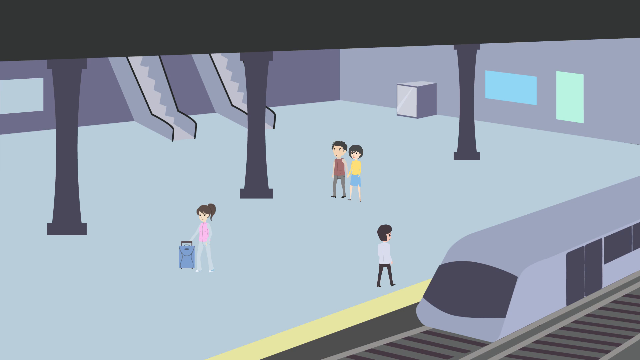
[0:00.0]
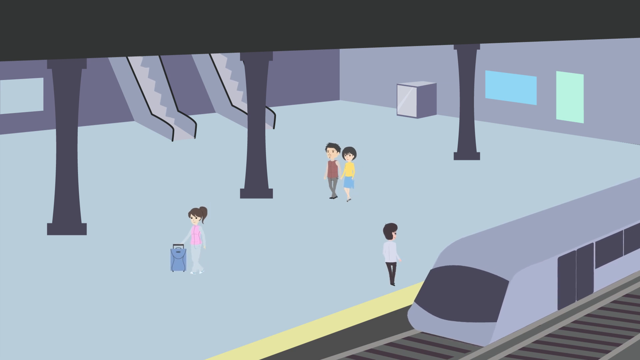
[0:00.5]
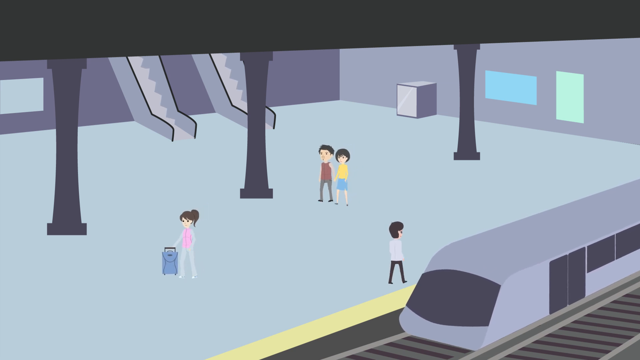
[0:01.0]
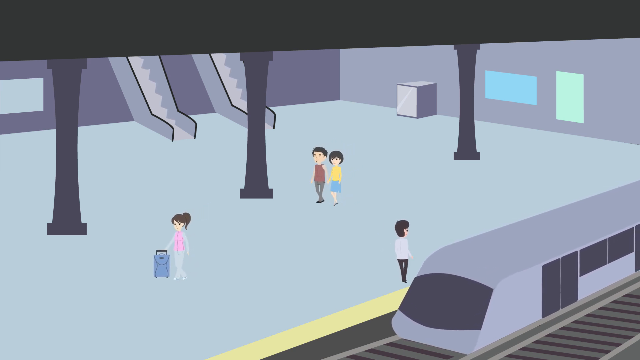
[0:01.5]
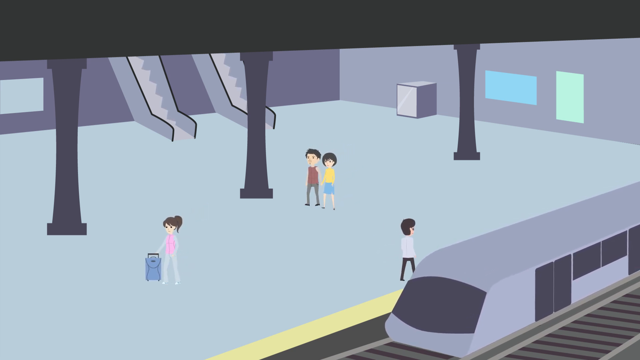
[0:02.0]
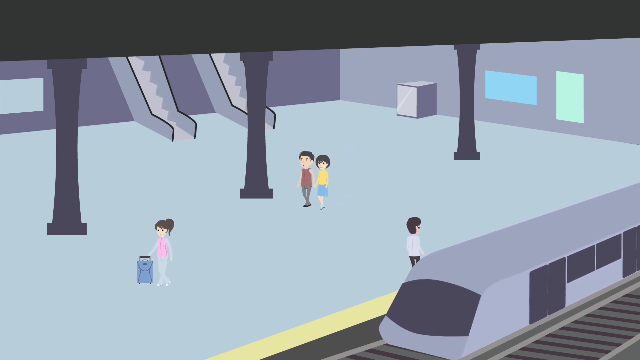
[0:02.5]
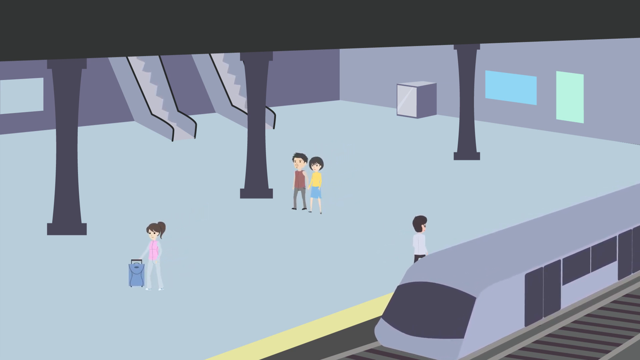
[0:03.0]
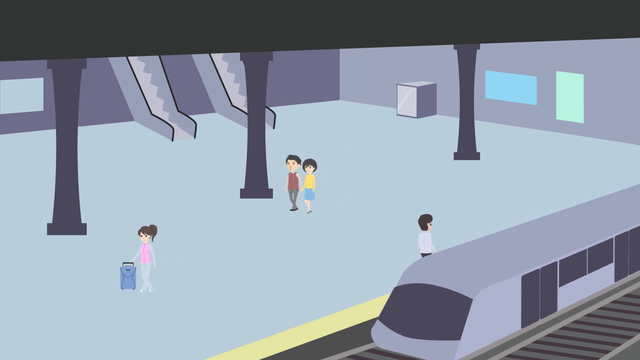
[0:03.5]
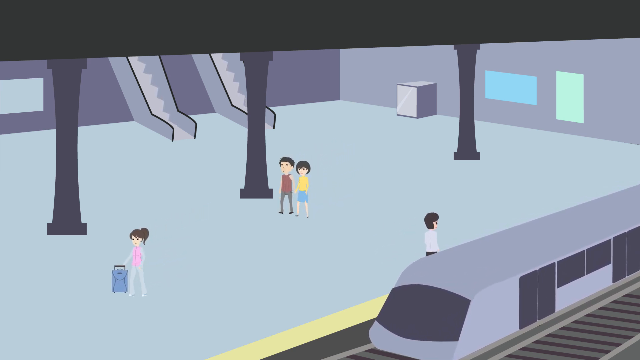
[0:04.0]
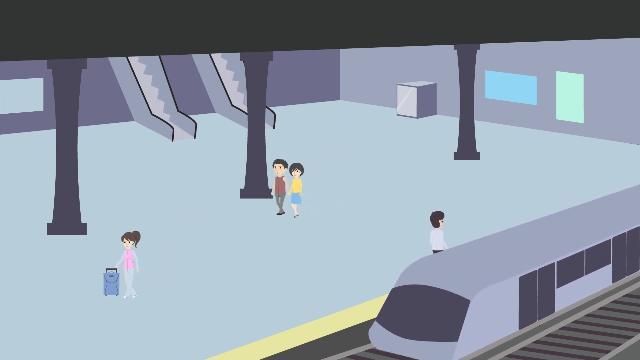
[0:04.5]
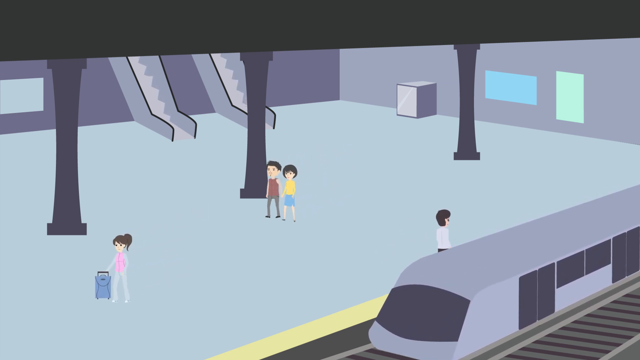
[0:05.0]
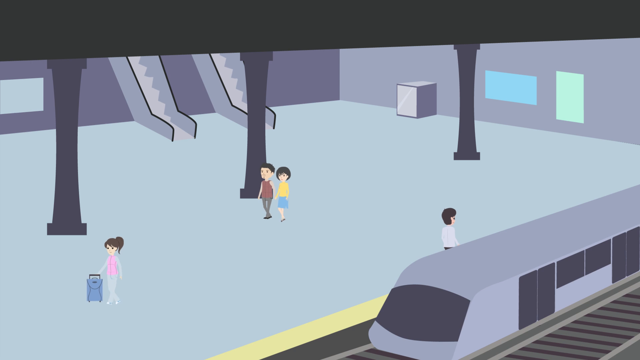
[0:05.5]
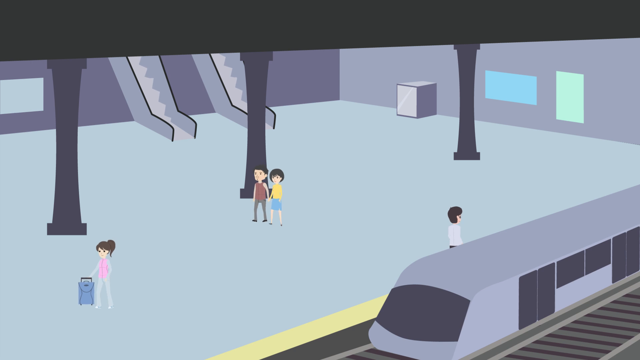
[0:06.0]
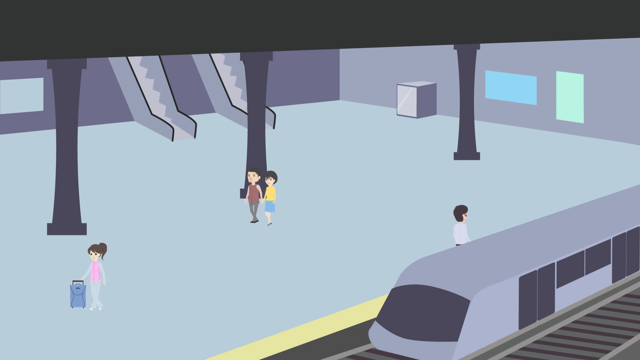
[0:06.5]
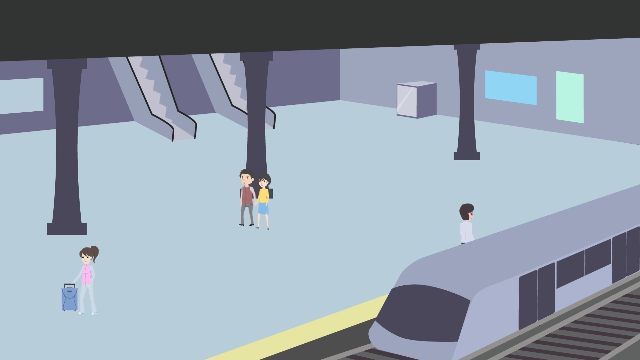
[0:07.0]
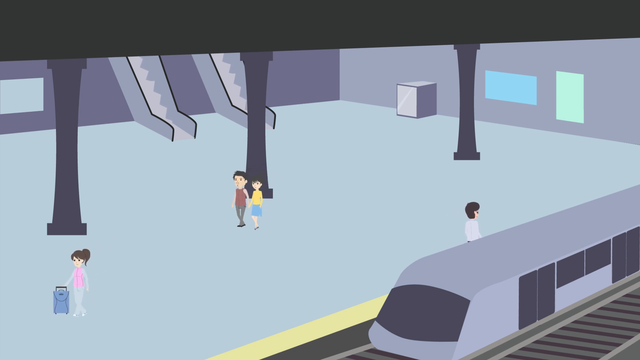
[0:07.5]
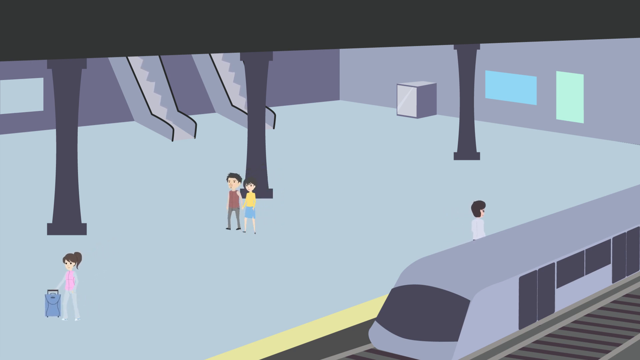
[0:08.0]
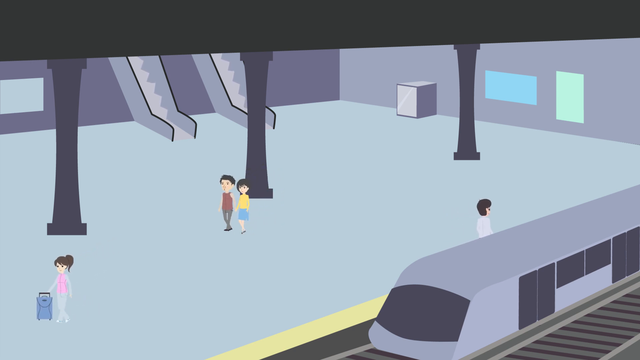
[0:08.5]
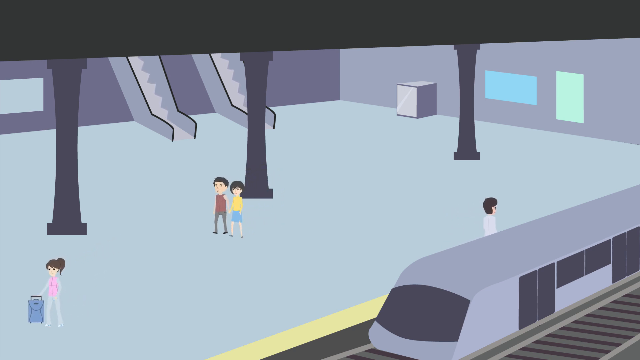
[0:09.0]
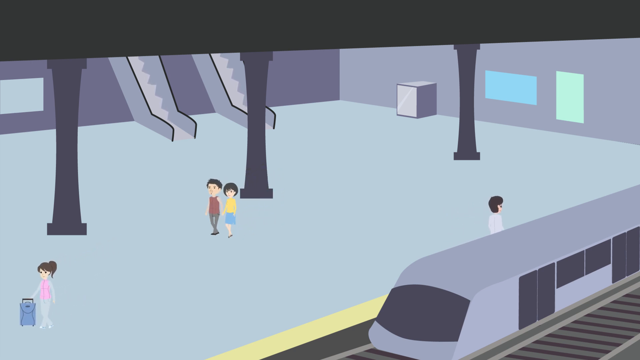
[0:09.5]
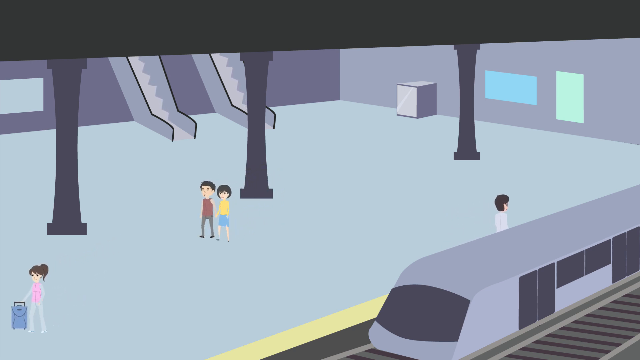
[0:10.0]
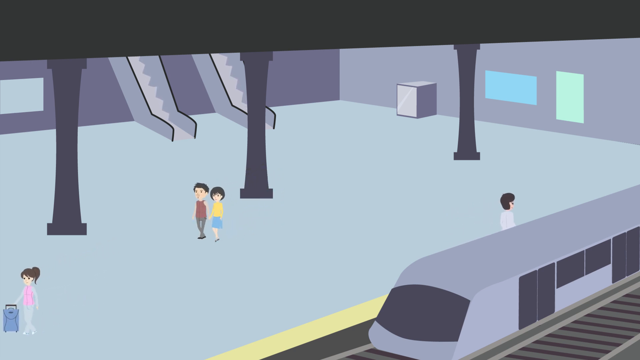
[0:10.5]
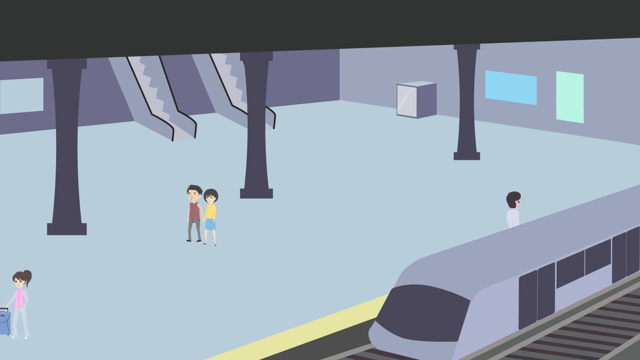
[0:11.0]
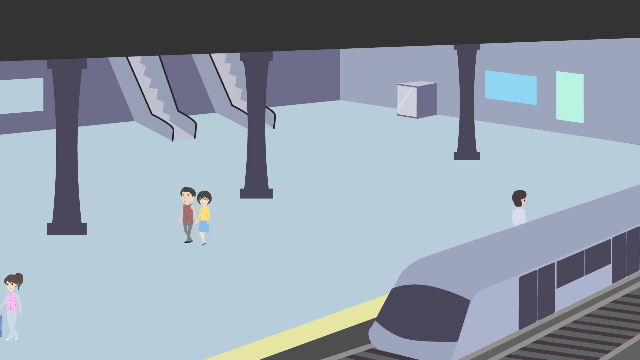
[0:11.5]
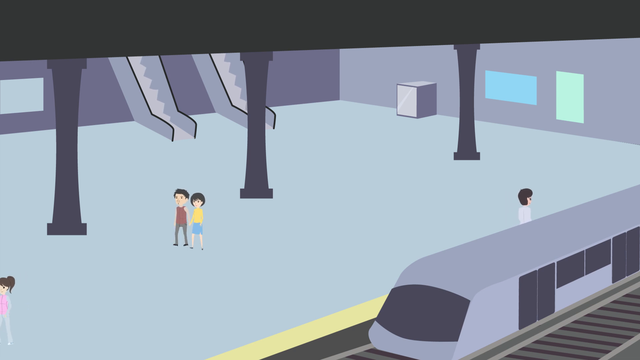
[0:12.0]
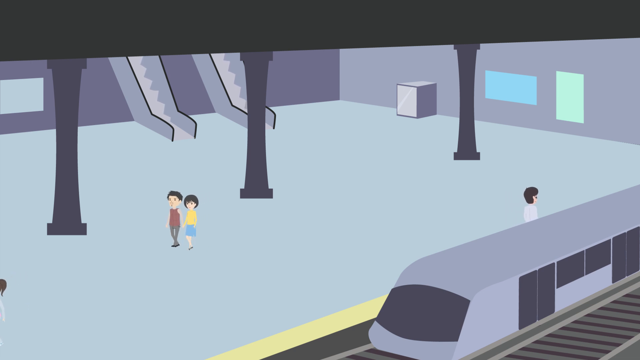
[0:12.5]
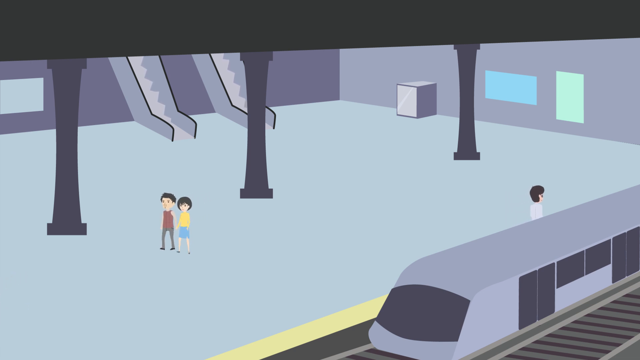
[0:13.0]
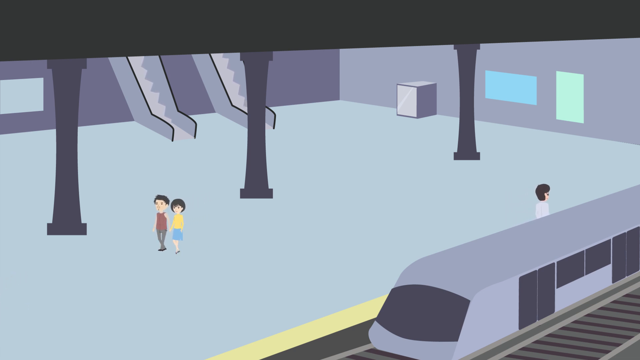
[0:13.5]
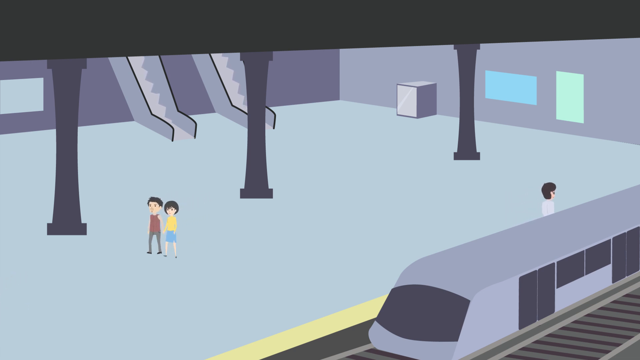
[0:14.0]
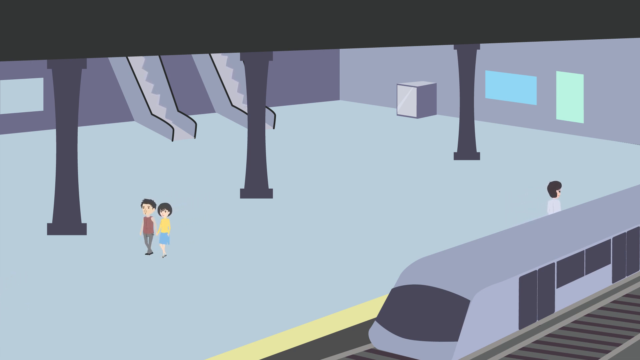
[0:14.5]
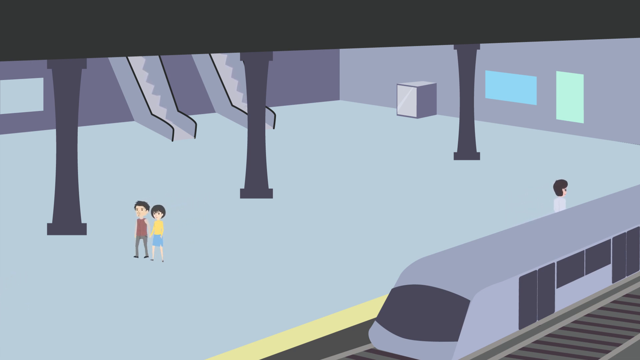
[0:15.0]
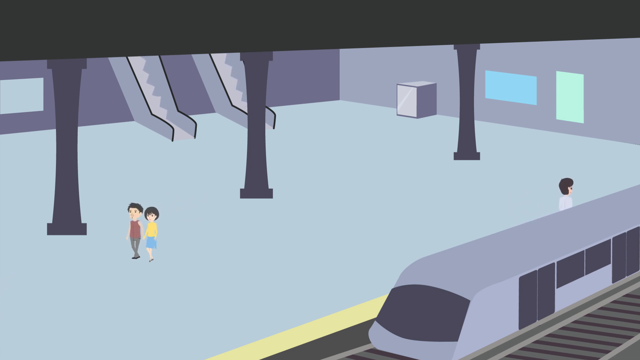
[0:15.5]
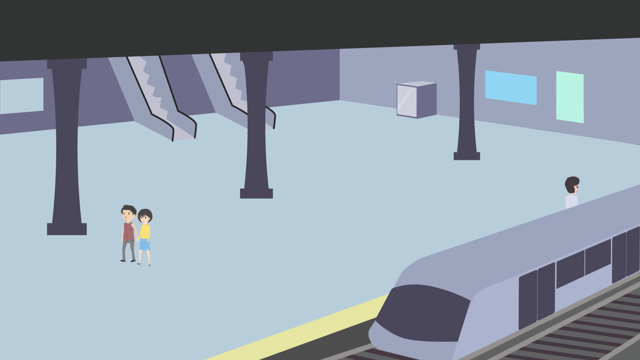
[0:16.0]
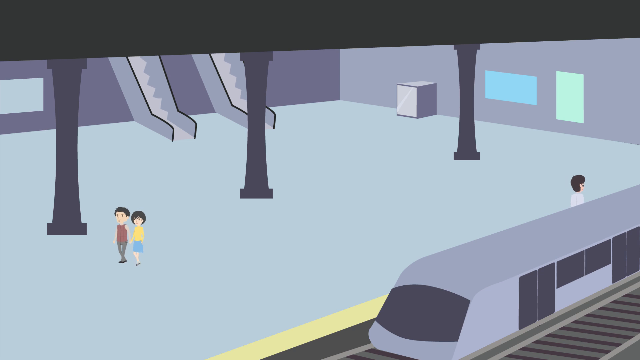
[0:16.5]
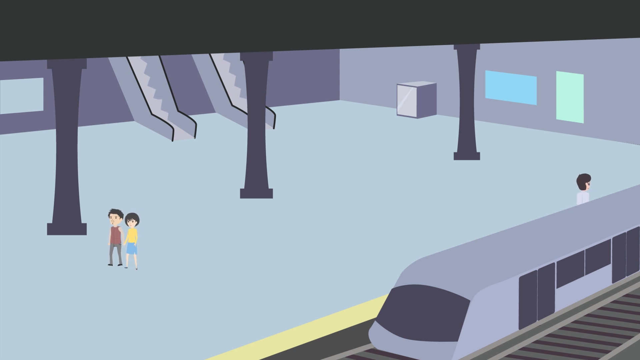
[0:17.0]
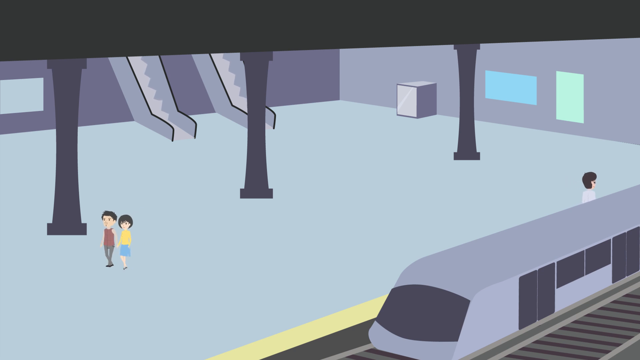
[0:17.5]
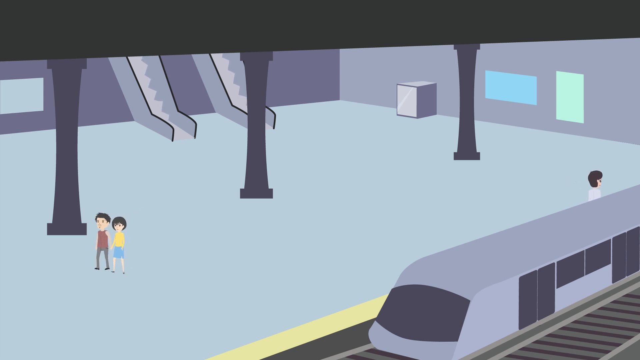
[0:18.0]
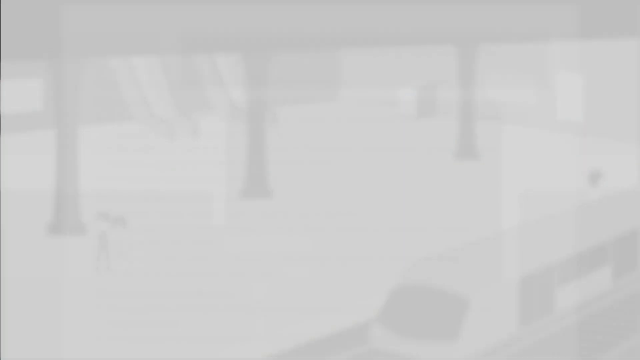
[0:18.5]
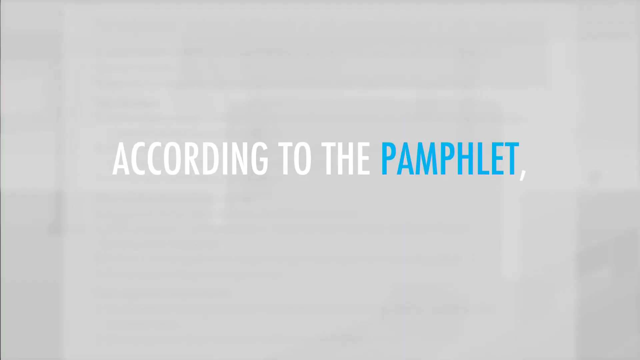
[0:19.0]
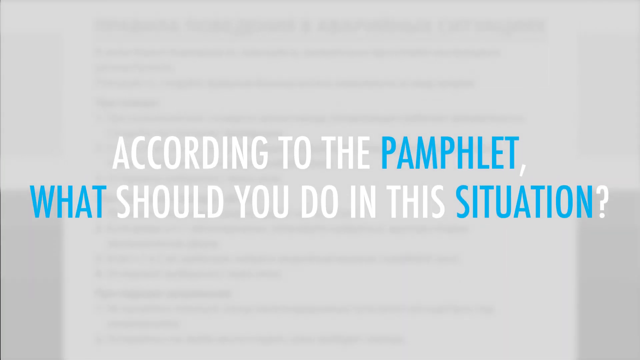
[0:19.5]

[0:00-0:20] Several people appear in a train station. The first is a lady in gray and pink clothing with a blue suitcase. The second is a man with black hair, black pants and a white shirt. The third is a couple: the woman wears a blue blouse and yellow shirt, and the man wears gray pants and a red shirt. They are walking as the train approaches. The train is gray with a black screen, black windows and black doors. The woman and the couple walk away from the train while the man walks toward the entrance of the train doors. The station is mainly gray. There are two sets of elevators with a black outline and gray stairs. The pillars are black and the walls are painted gray, with occasional posters of different colors, one green, one blue and one light gray. The floors are also light gray. The woman keeps walking and exits the frame, with the couple walking behind her. The man continues walking, getting further and further away, as the train has stopped.